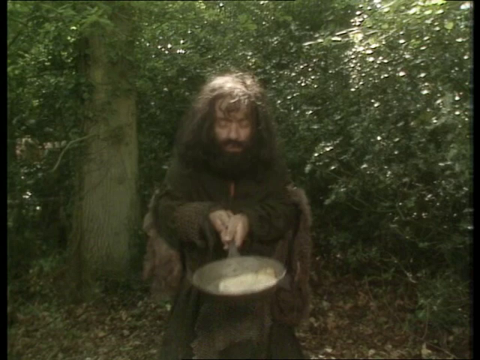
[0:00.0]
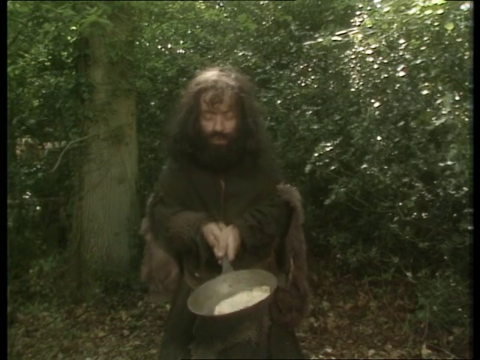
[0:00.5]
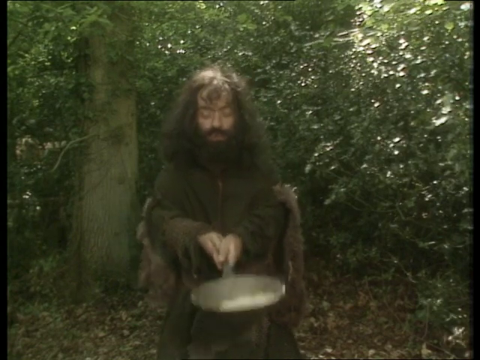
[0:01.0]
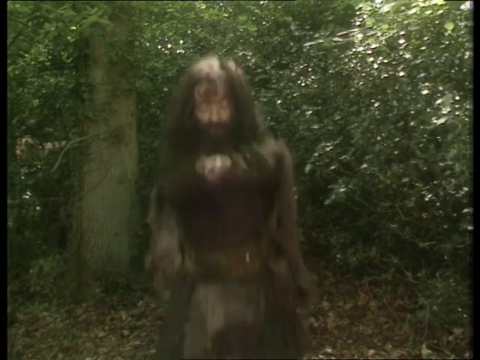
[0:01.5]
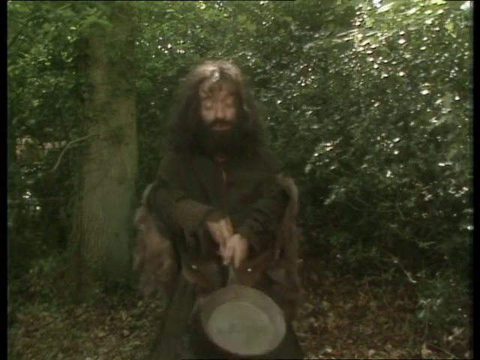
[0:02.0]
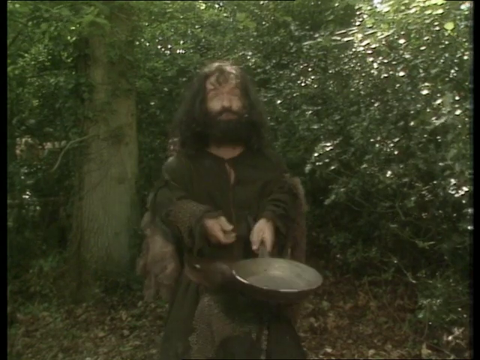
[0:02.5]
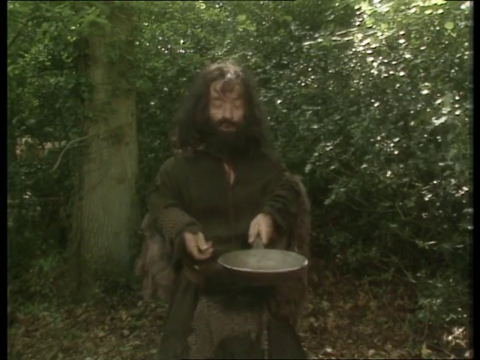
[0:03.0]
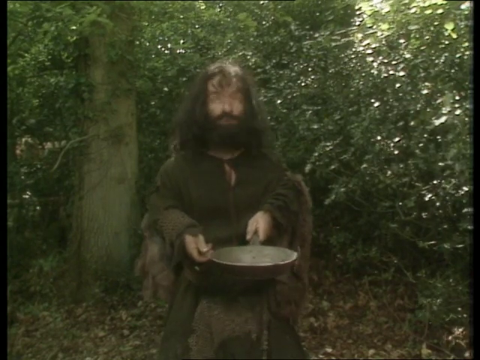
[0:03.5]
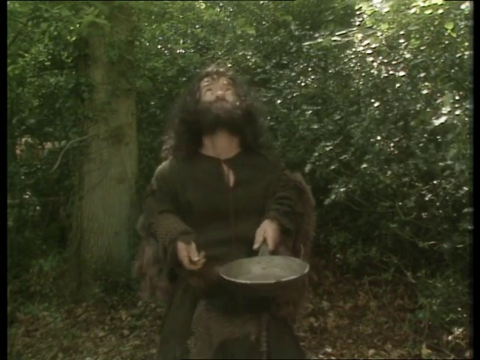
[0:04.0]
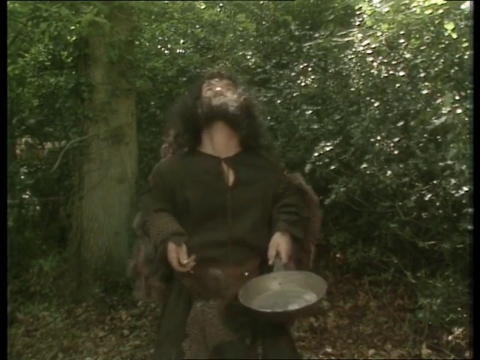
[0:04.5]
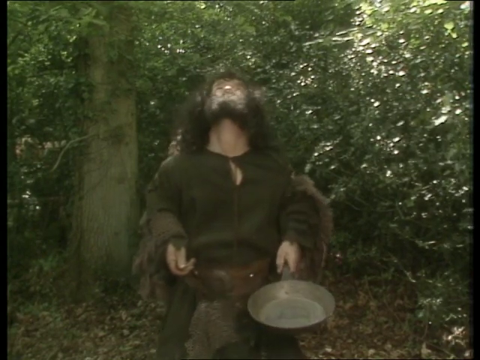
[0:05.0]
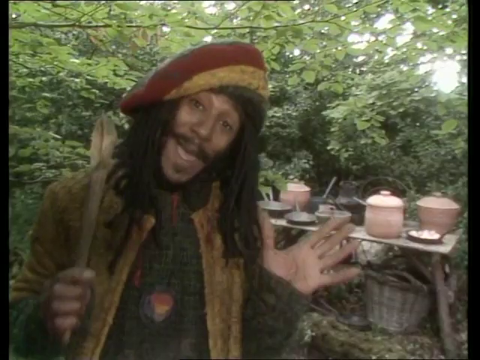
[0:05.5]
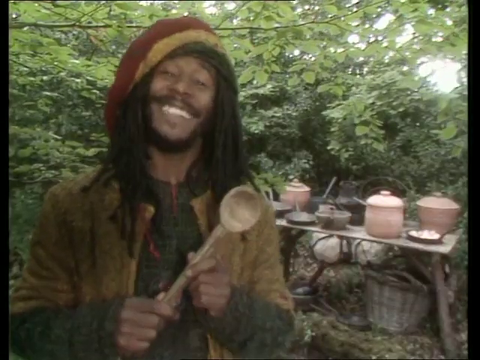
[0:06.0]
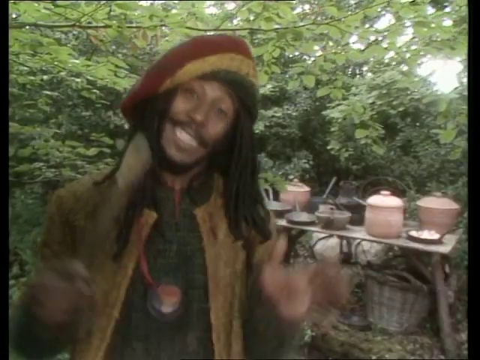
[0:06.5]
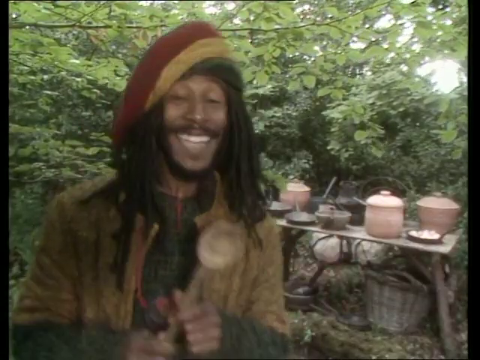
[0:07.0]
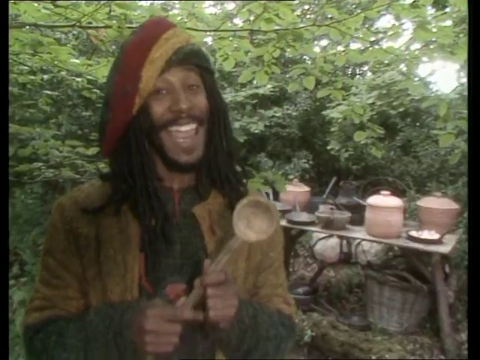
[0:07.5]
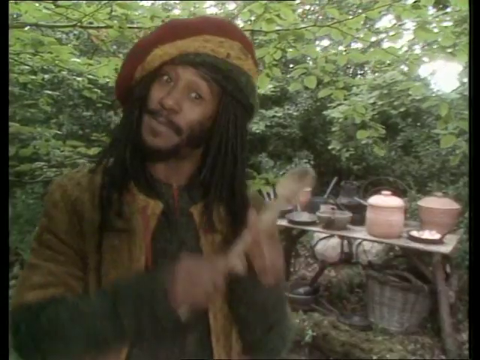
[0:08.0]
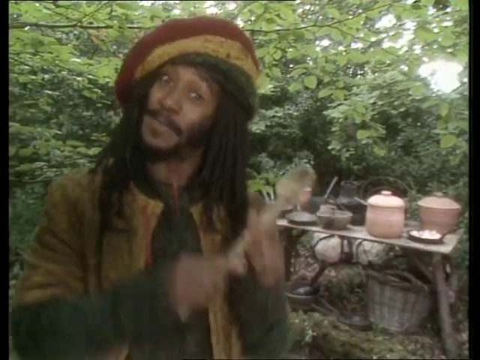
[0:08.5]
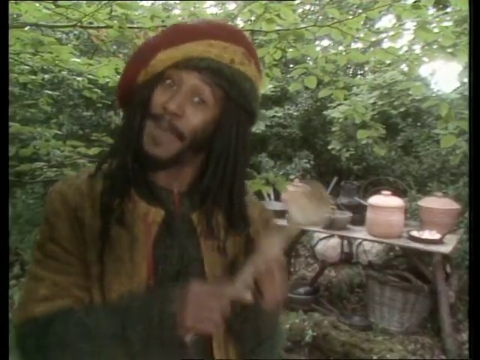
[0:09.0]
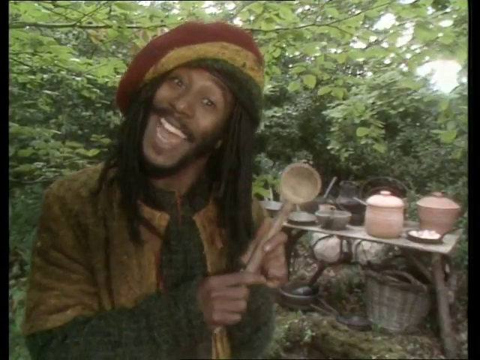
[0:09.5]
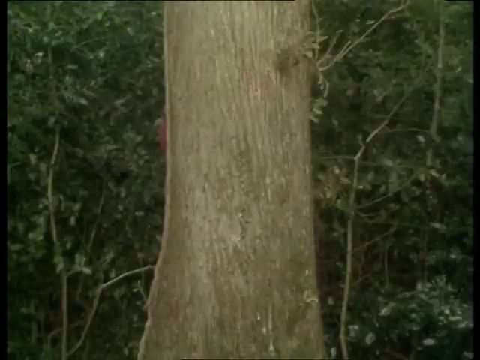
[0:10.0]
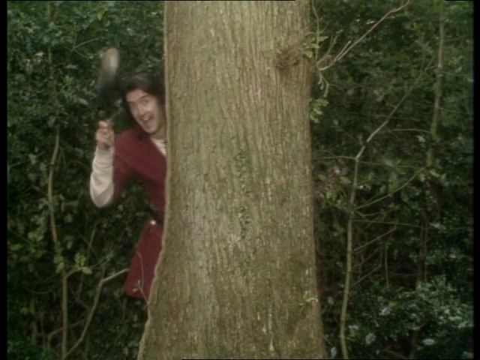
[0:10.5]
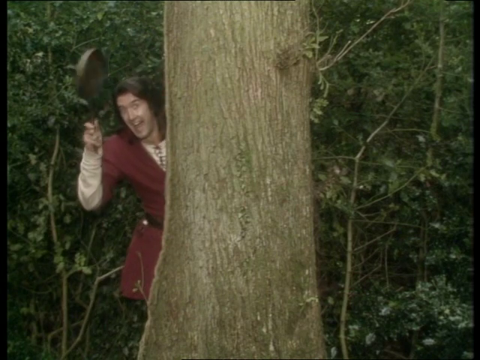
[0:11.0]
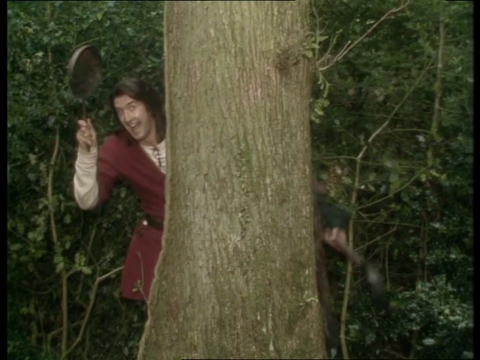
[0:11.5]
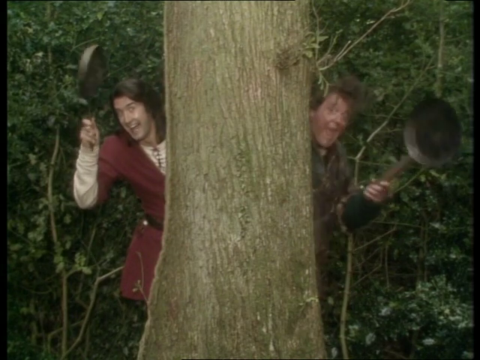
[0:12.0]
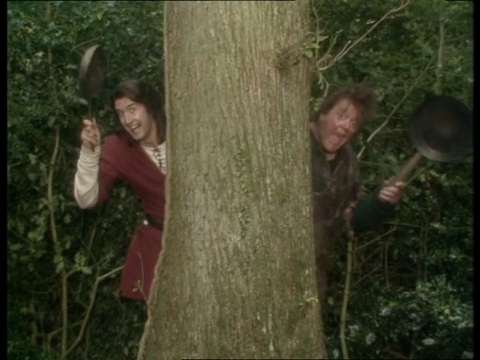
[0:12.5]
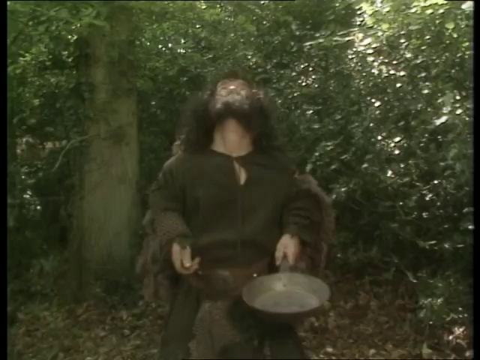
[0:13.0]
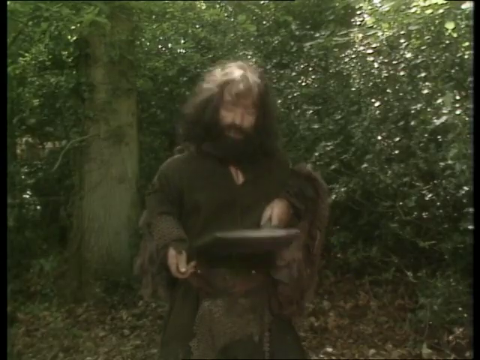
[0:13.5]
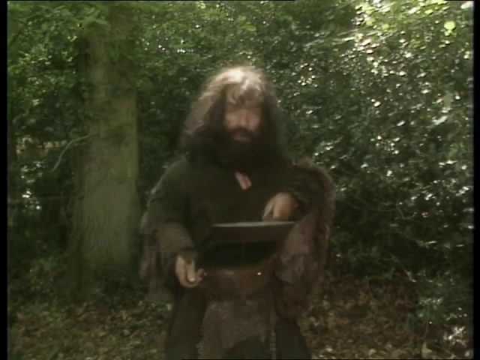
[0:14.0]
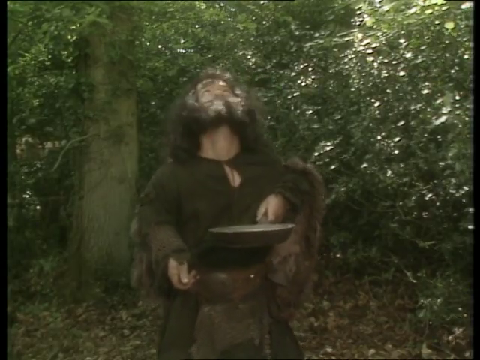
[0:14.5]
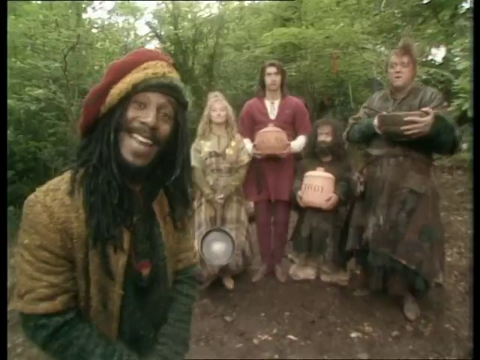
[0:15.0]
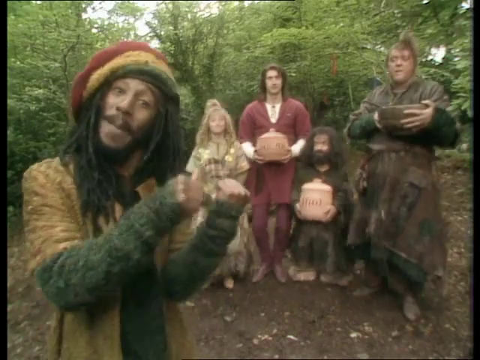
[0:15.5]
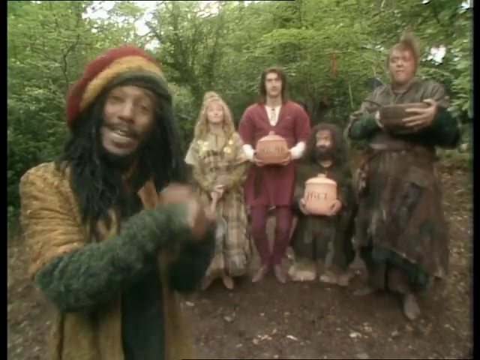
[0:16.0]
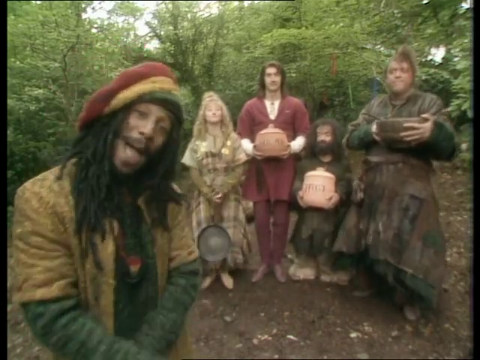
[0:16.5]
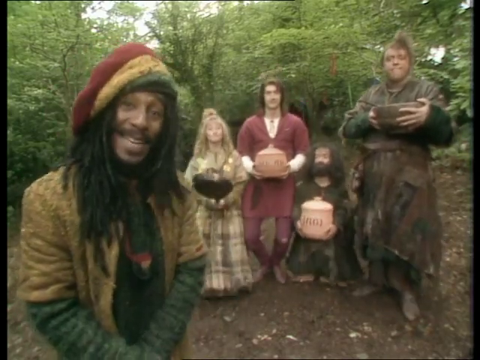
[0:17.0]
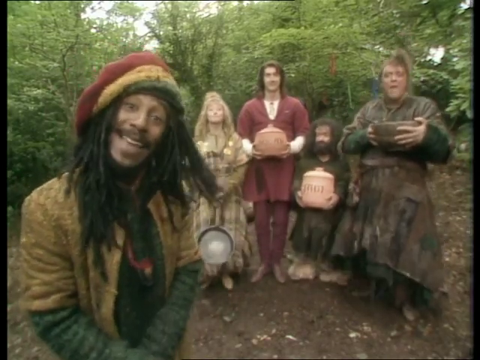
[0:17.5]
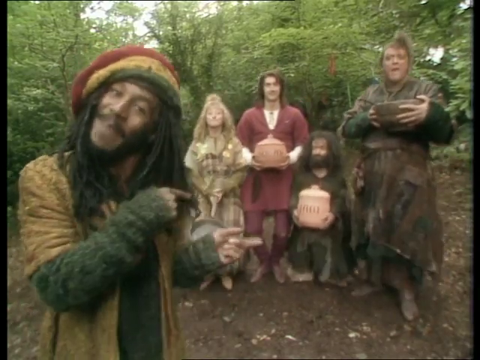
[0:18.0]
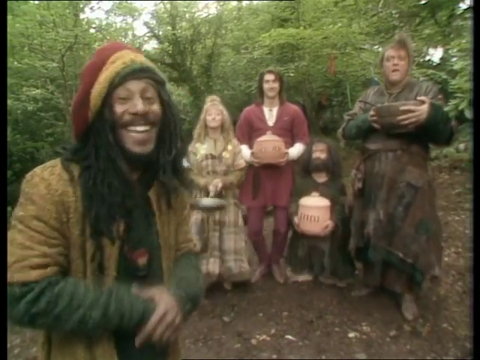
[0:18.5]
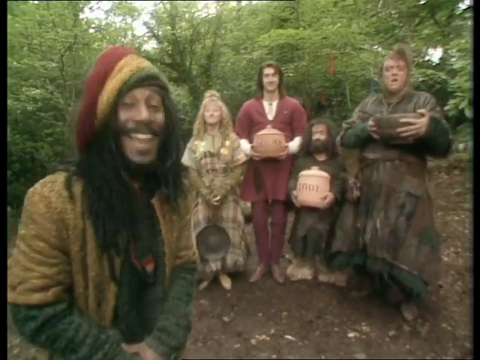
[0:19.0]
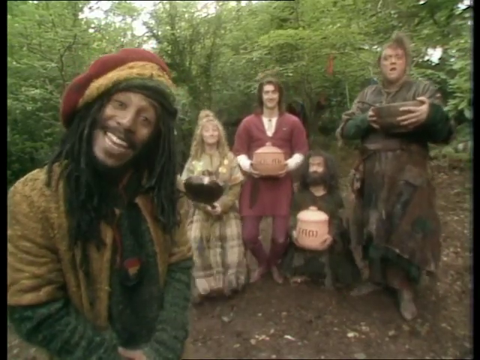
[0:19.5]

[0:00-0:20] What looks to be a little person in a scraggly brown robe holds a pan by the handle with both hands, with some sort of food in it. He shakes it a little and tosses the food up with the pan, elevating his arms. He has long brown hair and a long brown mustache and beard, and he is in what looks to be some sort of forest with a bunch of trees and grass. He looks up, and the video cuts to an African American man with dreadlocks and a red and yellow beanie of some sort. He wears a brownish jacket with some sort of green clothing underneath. Smiling, he holds a wooden spoon, wrapping the index finger and thumb of his left hand around it. He sways back and forth rather than hopping, and a video edit makes him sway repeatedly over and over, as if he is glitching out. The video cuts to a scene of a tree, where a man in a red tunic with a vanilla-colored undershirt comes out with a pan in his hand, smiling as he spins the pan with his hand. Out the right side of the tree is a heavier-set man who also has a pan, holding it up and smiling. The video cuts back to the little person, who looks up and then down at his pan, and then to the African American man with dreadlocks smiling at the camera while a man, a woman, the little person and another man stand behind him, squatting at different intervals and at different times.